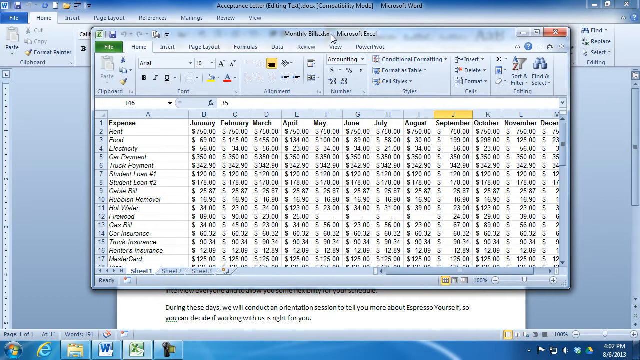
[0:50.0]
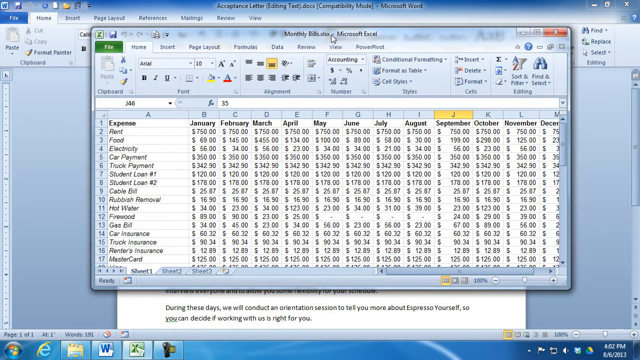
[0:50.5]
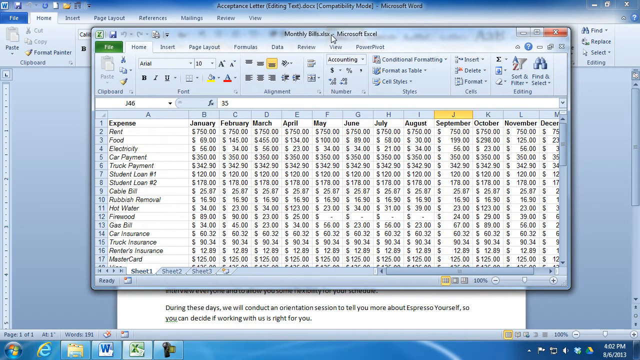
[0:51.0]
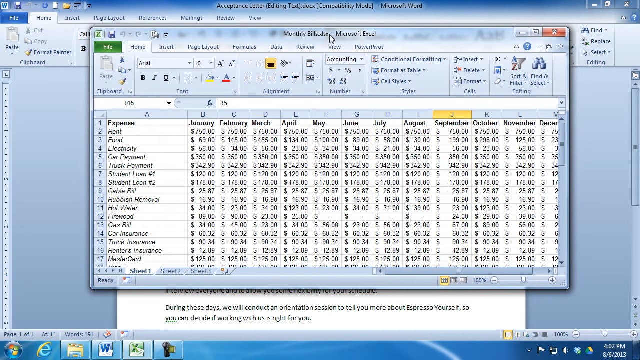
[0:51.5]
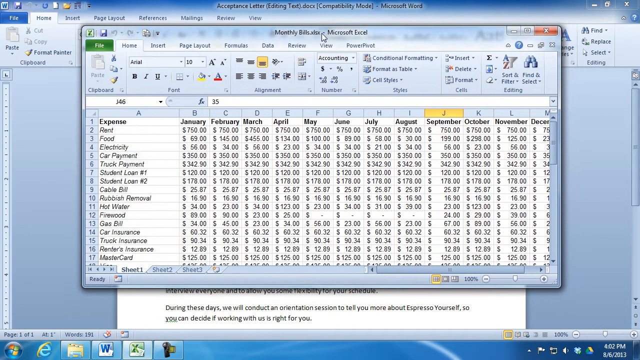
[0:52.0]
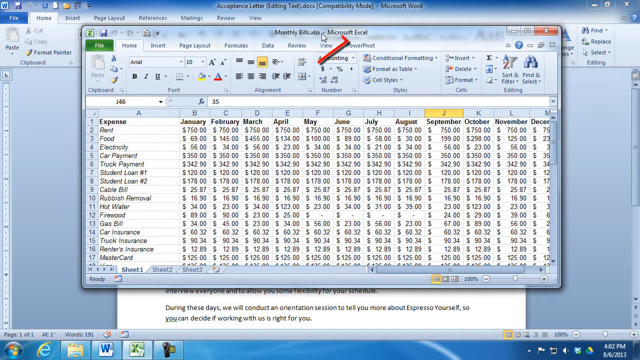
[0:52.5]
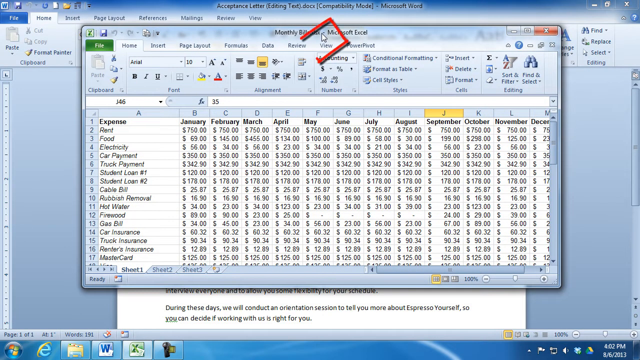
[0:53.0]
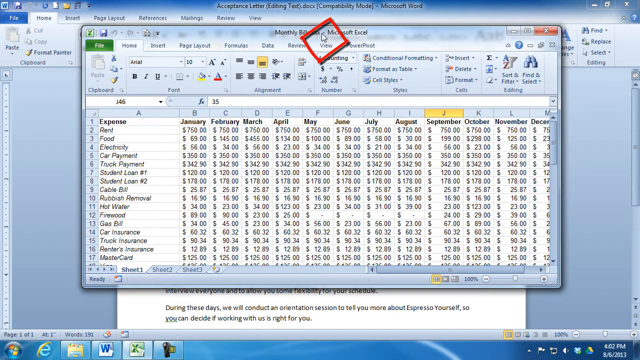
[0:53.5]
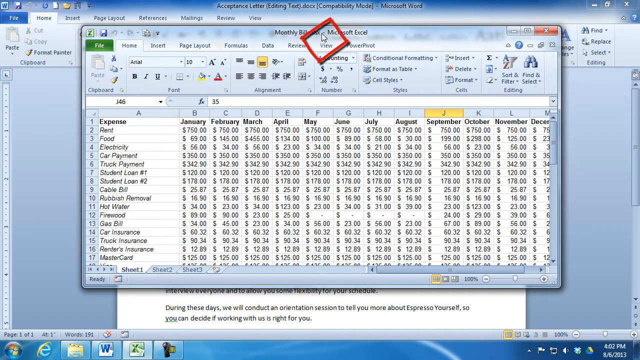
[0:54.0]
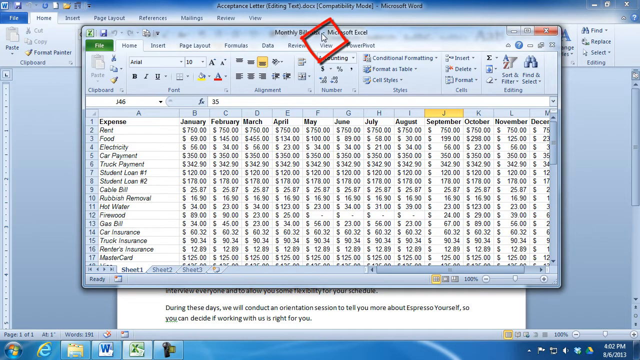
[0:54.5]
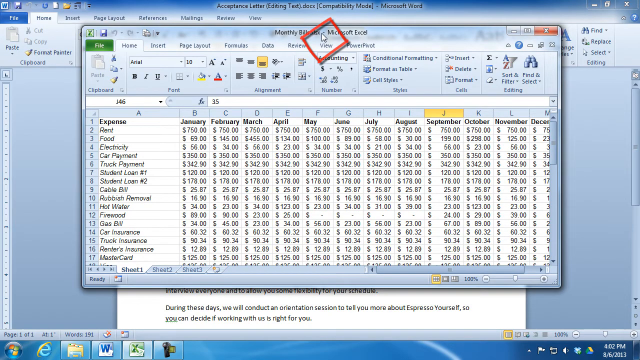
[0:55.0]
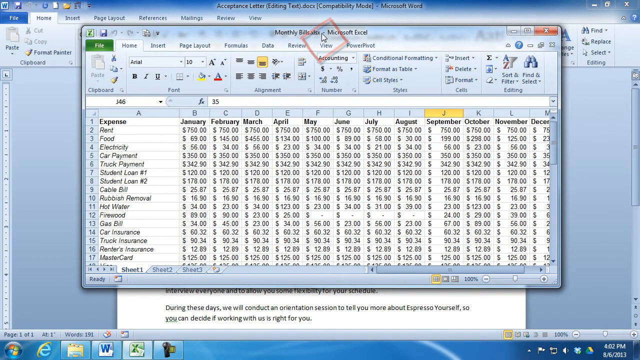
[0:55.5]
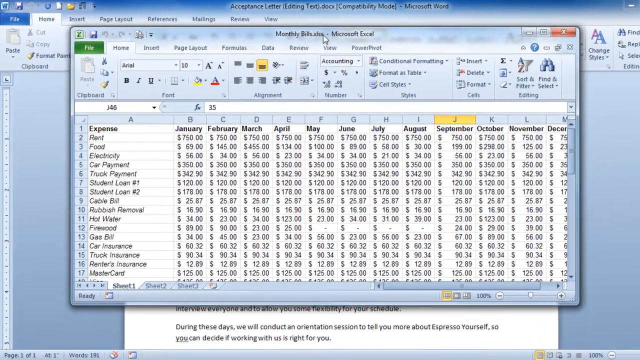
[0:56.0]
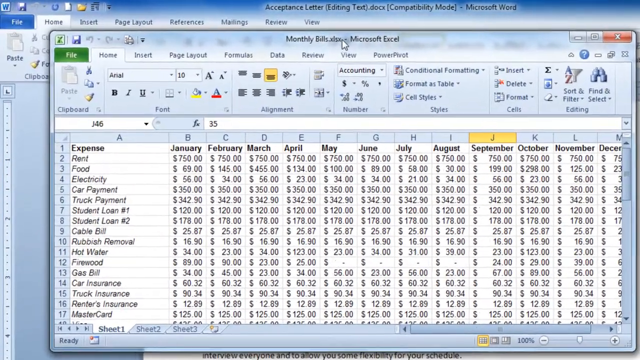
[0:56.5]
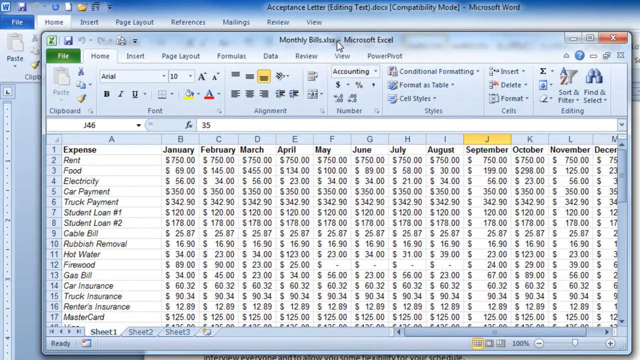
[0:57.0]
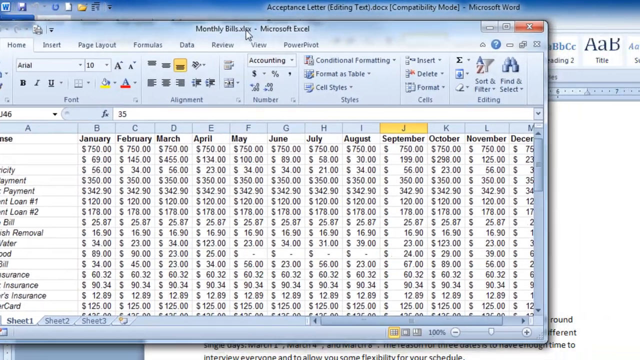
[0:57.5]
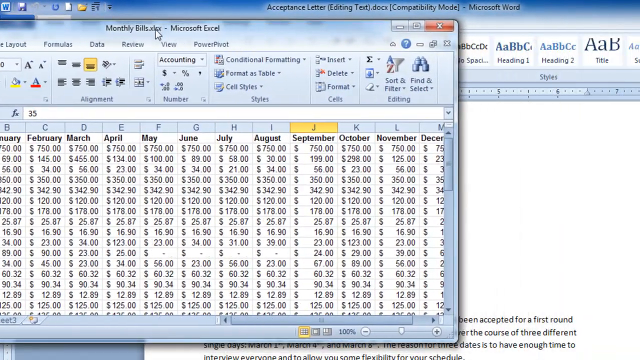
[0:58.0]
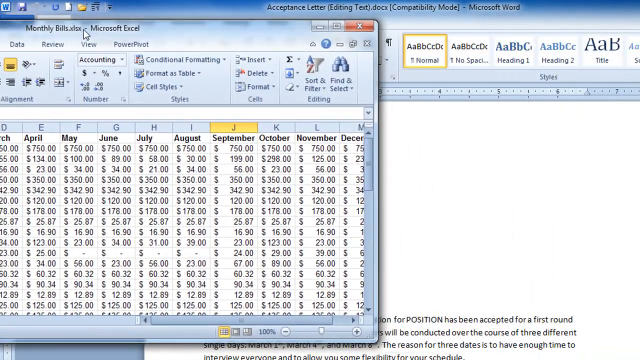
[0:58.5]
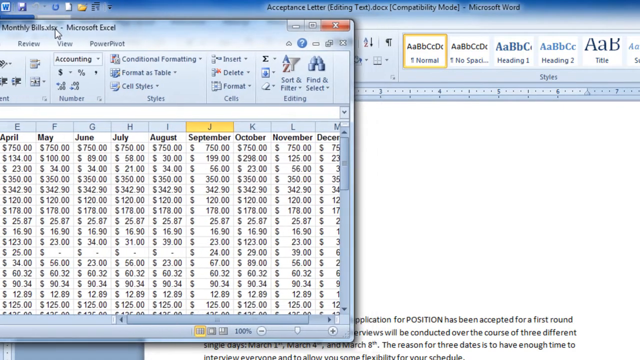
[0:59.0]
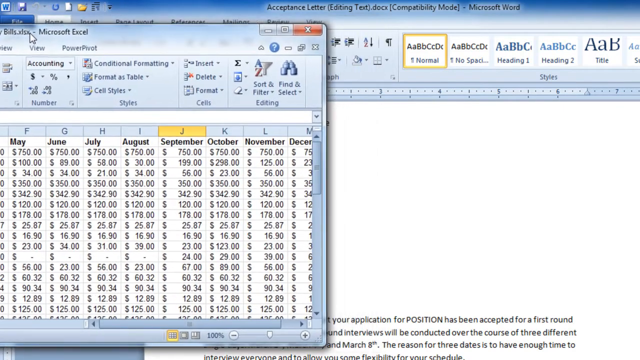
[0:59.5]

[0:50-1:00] Column J is highlighted in yellow, which appears to be the column of focus. The cursor is at the top of the floating monthly bill box. He clicks and holds, dragging the box a little to the left. Someone then hand-draws a red diamond shape with a marker where the cursor is, and the drawing dissolves and fades away. The view zooms in a little more, though the monthly bill window is not taking up the full screen. With the mouse pointer, the window is pulled further to the left until it is partly out of view and the header at the top is cut off, and then the movement stops. The Excel spreadsheet is on sheet one, with sheets two and three also present, and the highlighted column J is September. On the acceptance letter, the Home tab is currently selected; beneath it are paste options, cut and copy, which are grayed out, as well as format painter and clipboard.